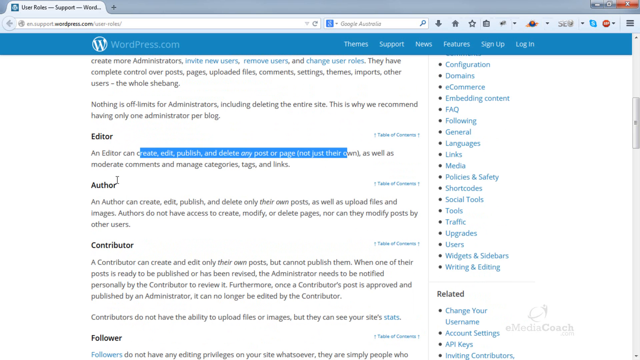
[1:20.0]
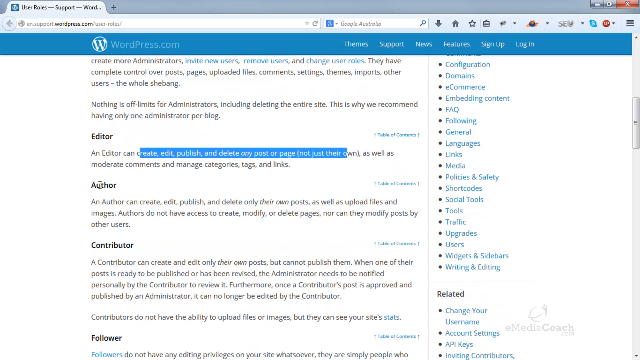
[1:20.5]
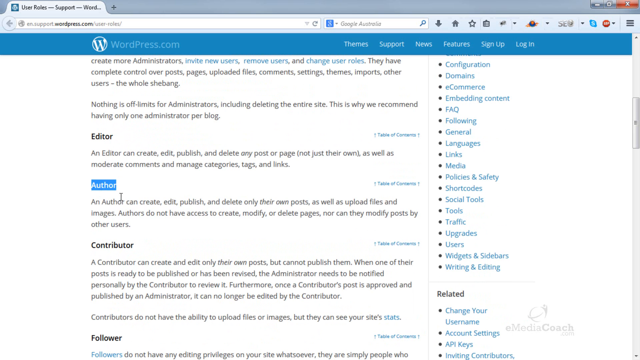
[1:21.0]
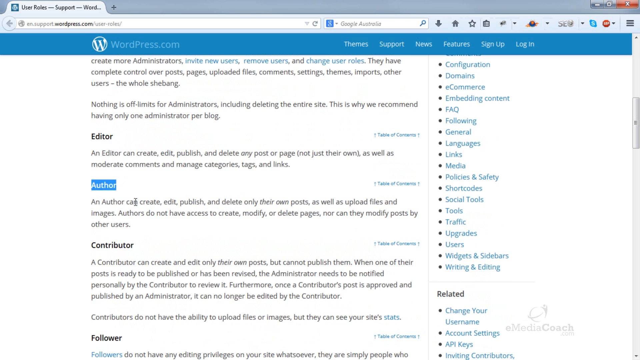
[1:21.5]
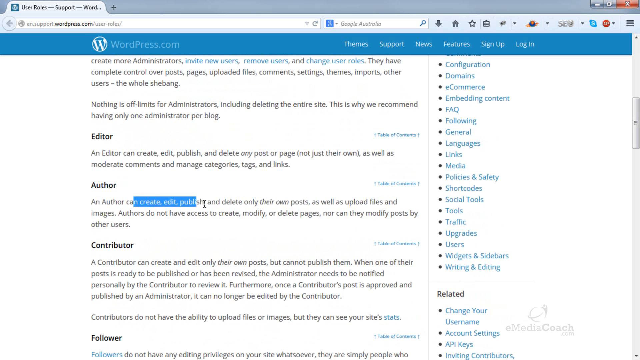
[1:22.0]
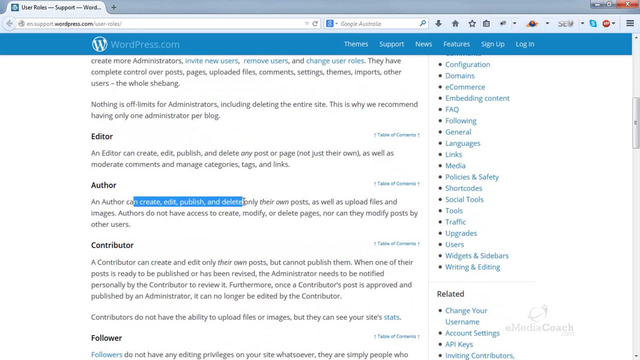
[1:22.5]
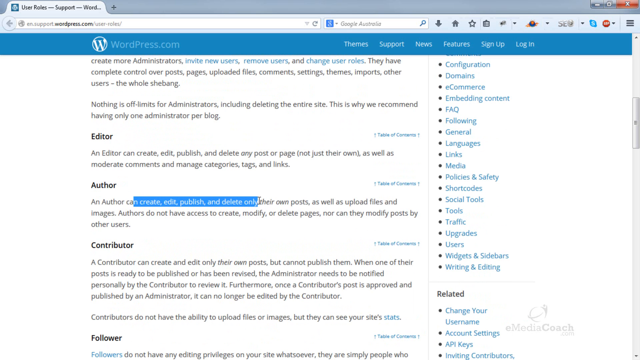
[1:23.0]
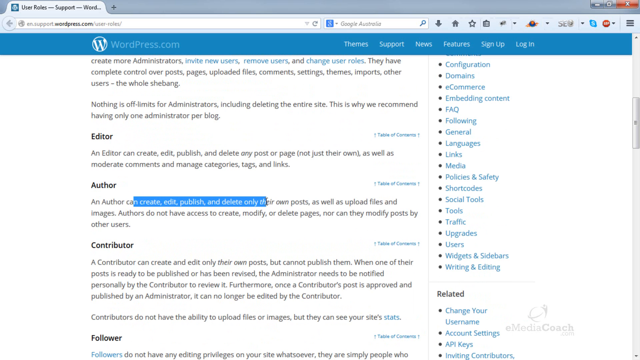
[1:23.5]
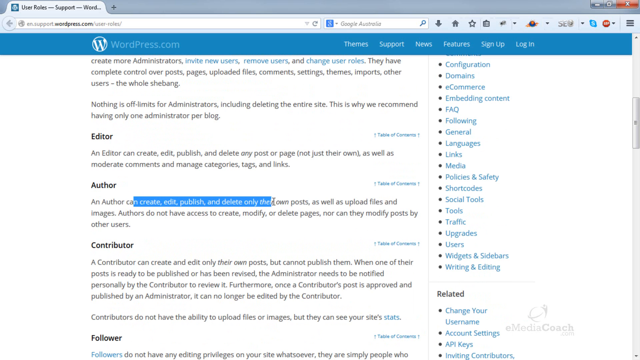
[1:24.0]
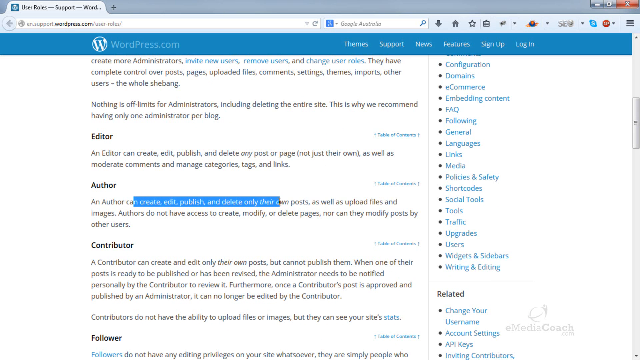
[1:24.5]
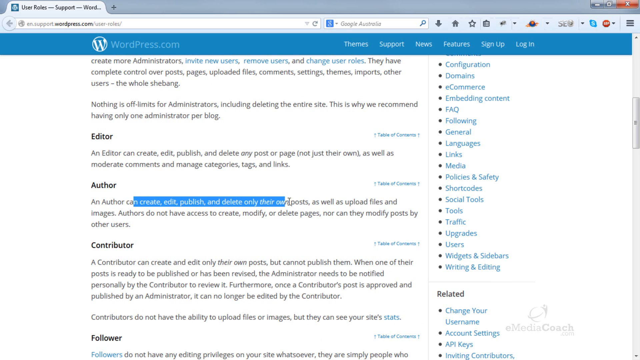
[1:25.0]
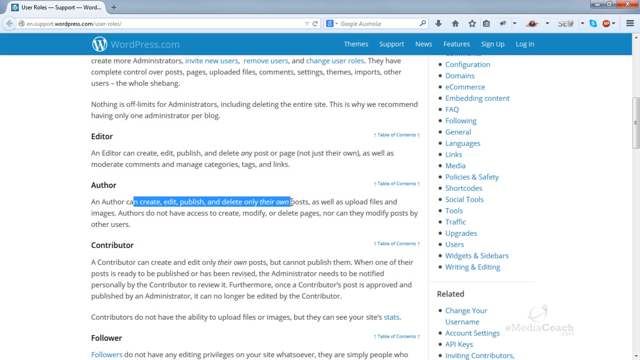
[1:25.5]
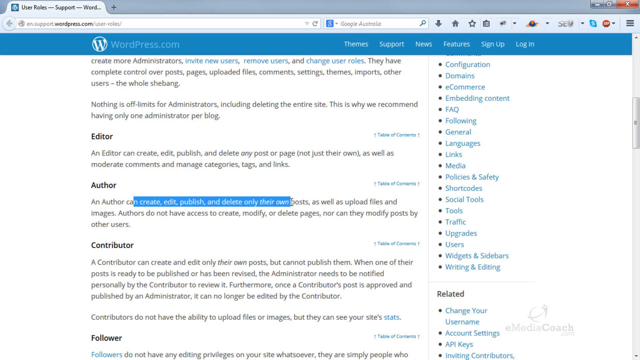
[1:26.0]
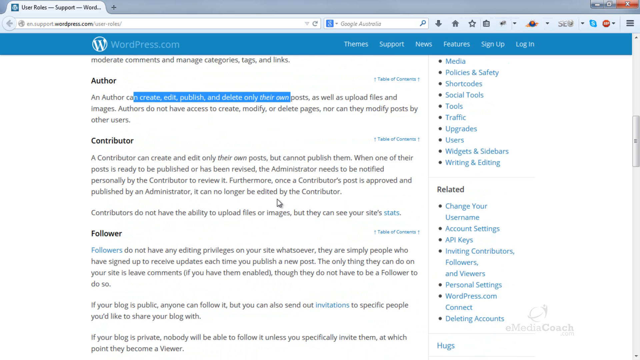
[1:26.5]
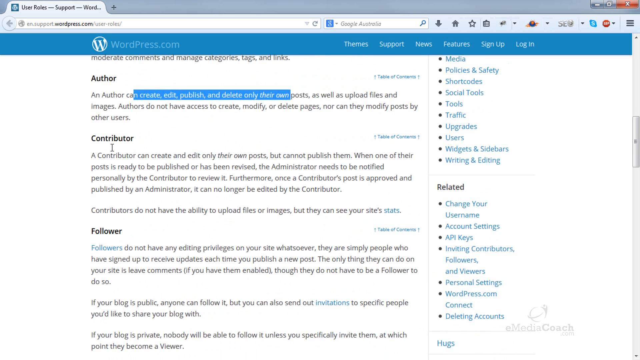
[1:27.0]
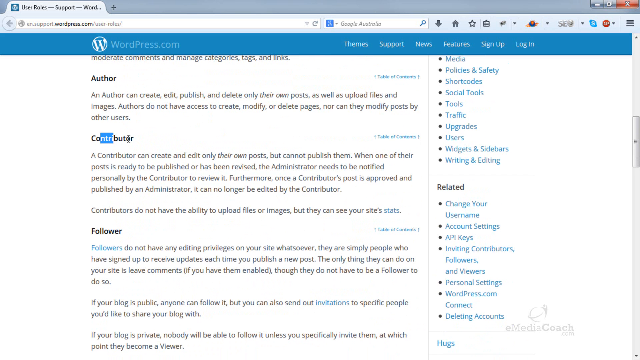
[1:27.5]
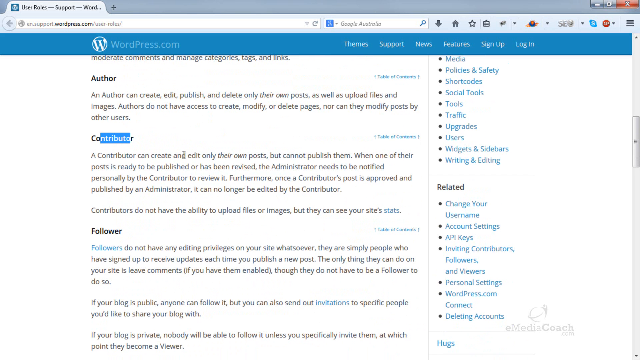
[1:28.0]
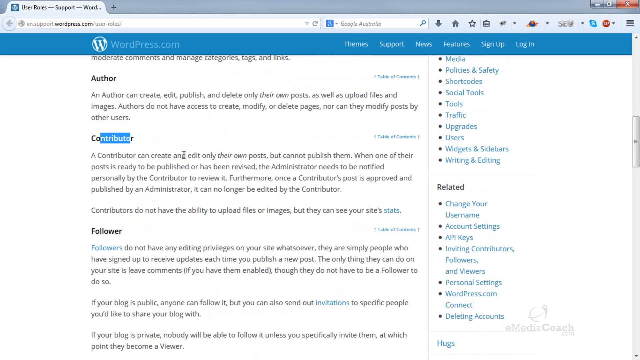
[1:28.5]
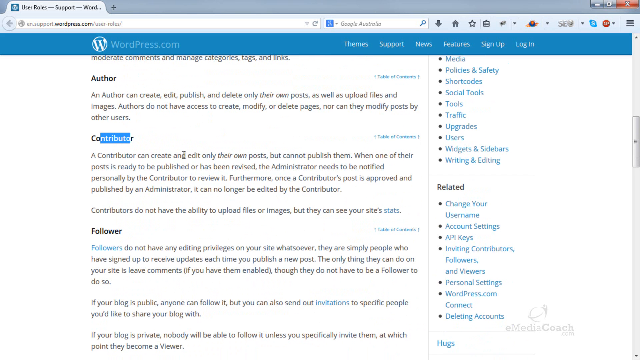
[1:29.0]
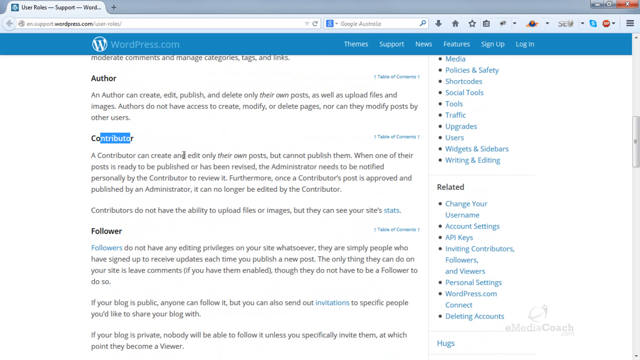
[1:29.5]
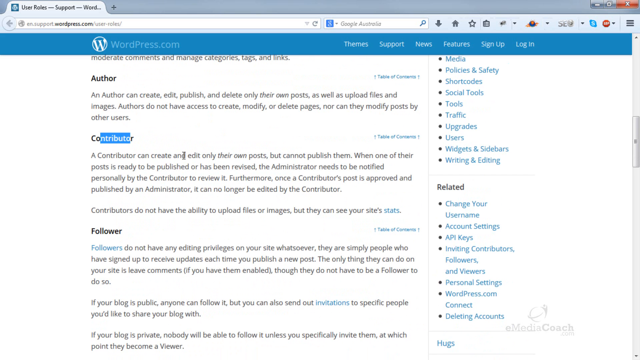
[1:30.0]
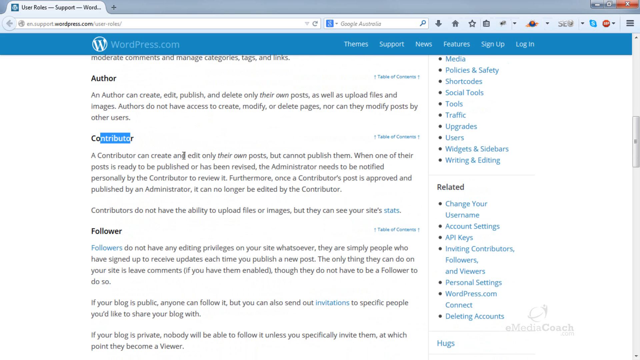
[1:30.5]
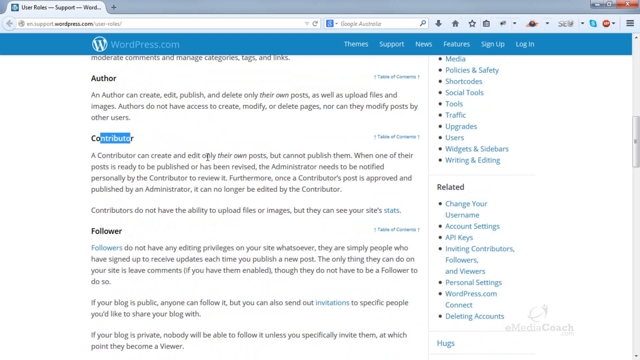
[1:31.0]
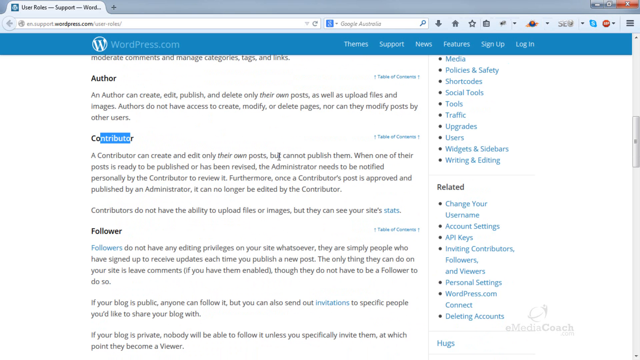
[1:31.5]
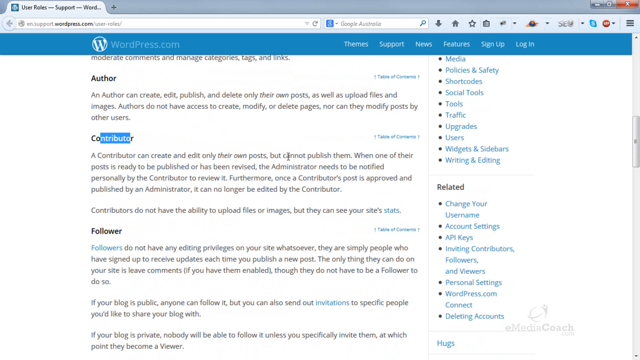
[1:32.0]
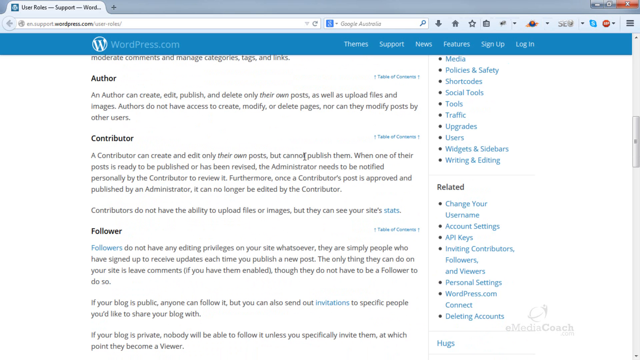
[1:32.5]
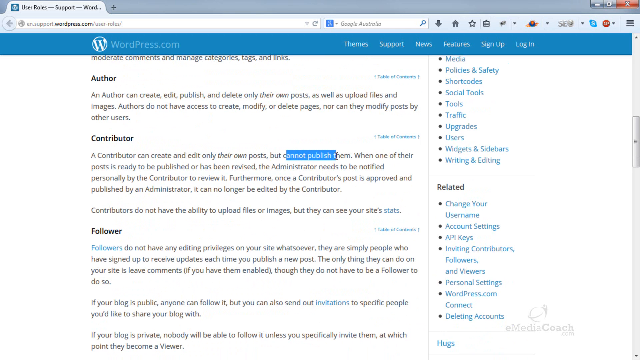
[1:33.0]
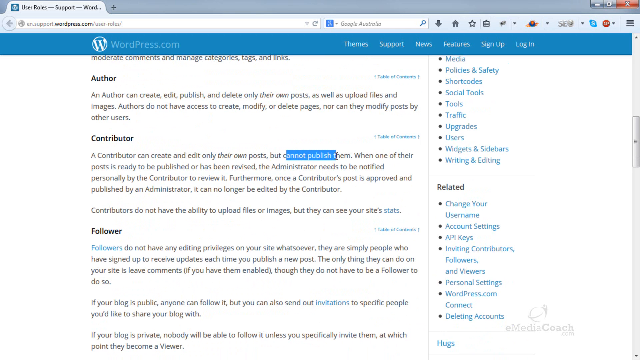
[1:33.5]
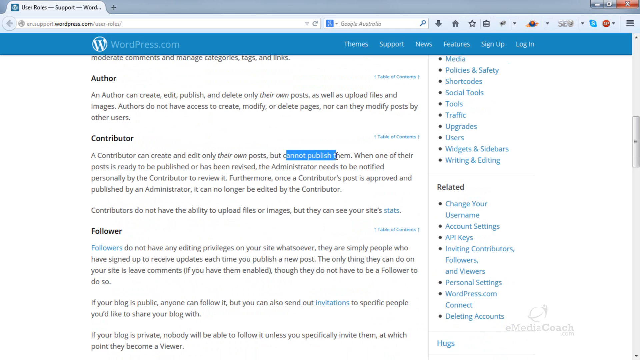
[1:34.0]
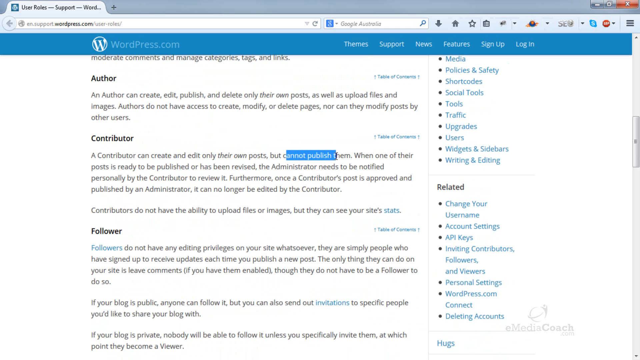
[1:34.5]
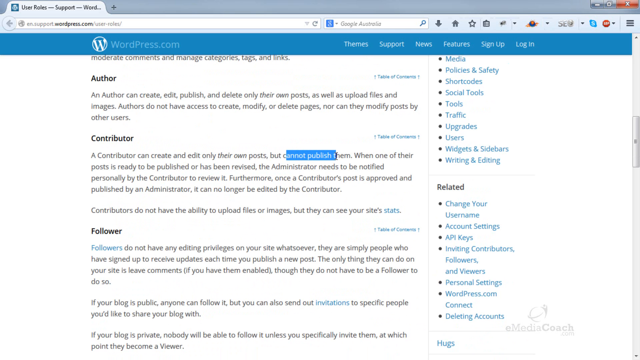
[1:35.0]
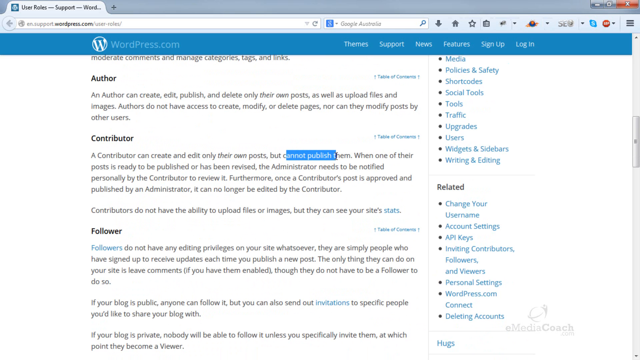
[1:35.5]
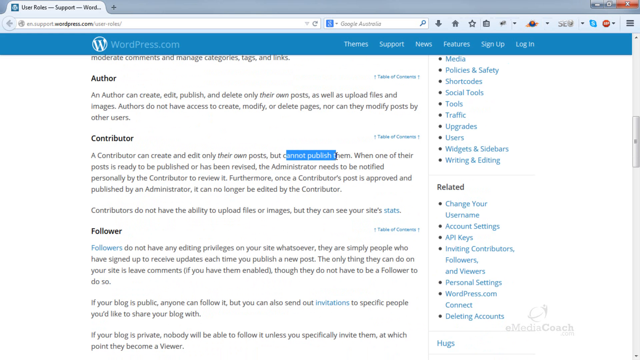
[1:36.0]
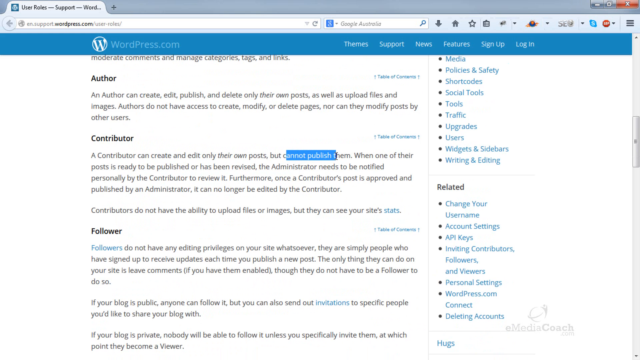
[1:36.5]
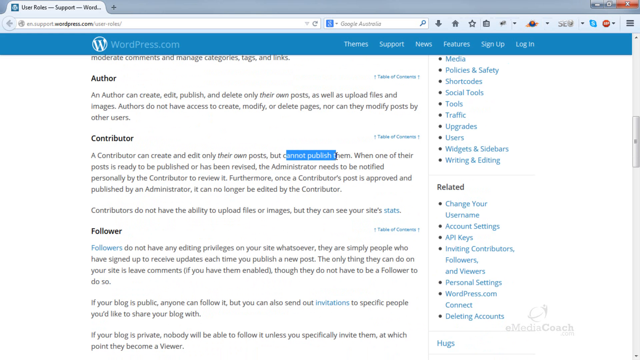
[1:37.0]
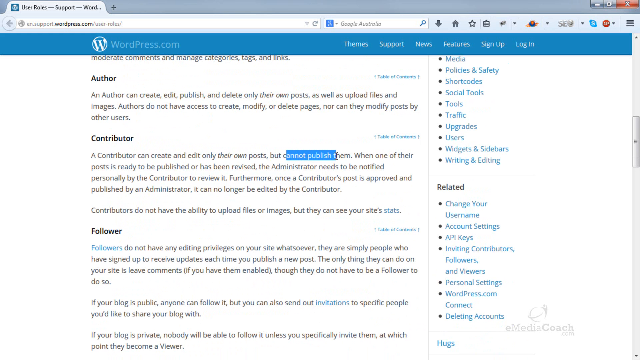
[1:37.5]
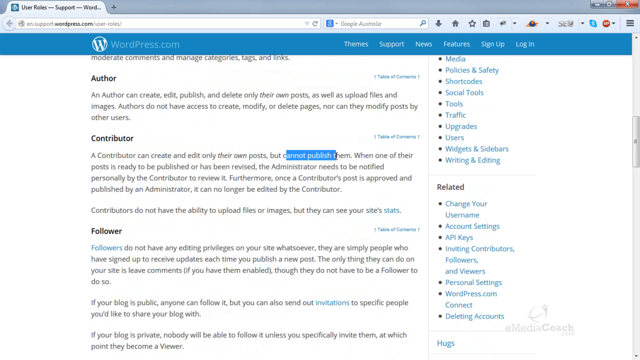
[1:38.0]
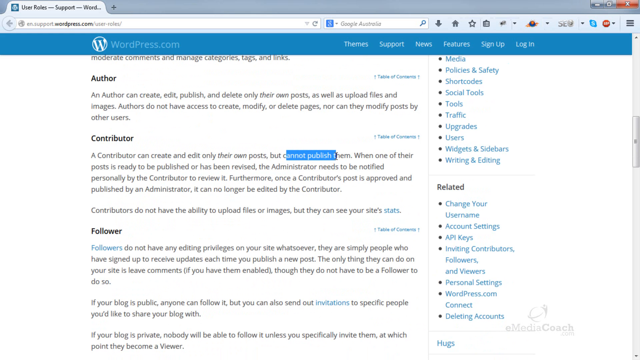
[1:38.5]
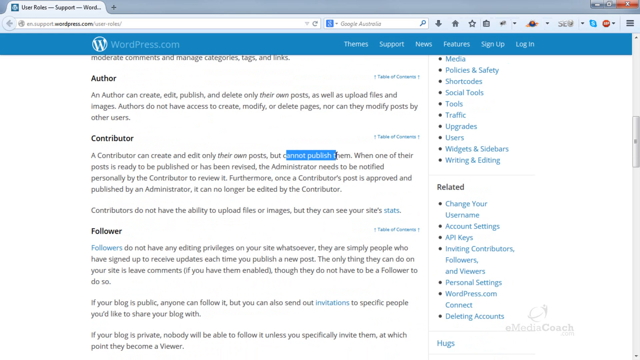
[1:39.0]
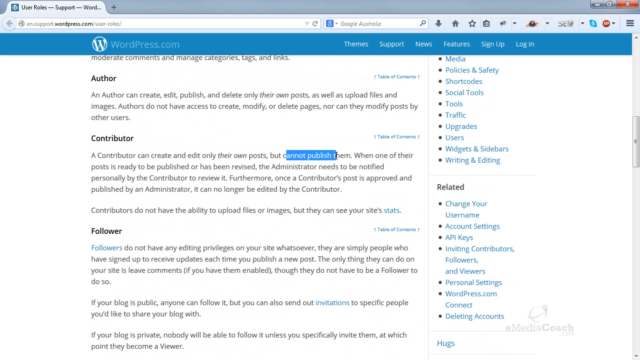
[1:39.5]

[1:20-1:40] The person is still on WordPress looking at the user roles and scrolls down a little. The editor section reads: "can create, edit, publish, delete any post or page (not just their own), as well as moderate comments, manage categories, tags, and links." The author section reads: "author can create, edit, publish, delete only their own posts as well as upload files or images, authors do not have access to create, modify, delete pages, nor can they modify posts by other users." The contributor section reads: "a contributor can create and edit only their own posts but cannot publish them. When one of their posts is ready to be published or has been revised, the administrator needs to be notified personally by the contributor to review it. Furthermore, once a contributor's post is approved and published by an administrator, it can no longer be edited by the contributor. Contributors do not have the ability to upload files or images, but they can see site stats." The person highlights "create, edit, publish, and delete any post" in the editor part, "can create, edit, publish, and delete their own post" in the author section, and in the contributor section highlights part of the word "contributor", leaving out the first "c", the "o" and the last "r", and also highlights "cannot publish".